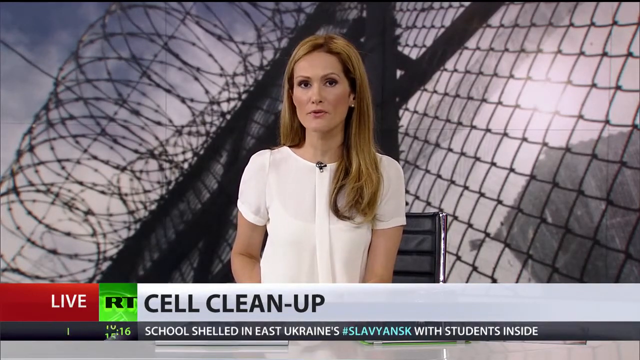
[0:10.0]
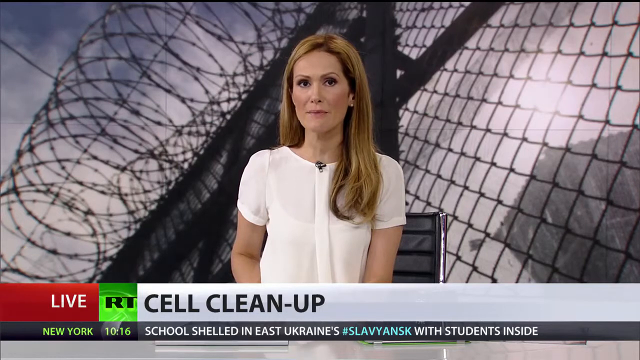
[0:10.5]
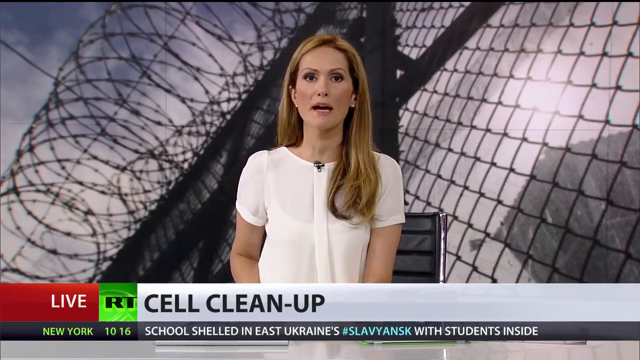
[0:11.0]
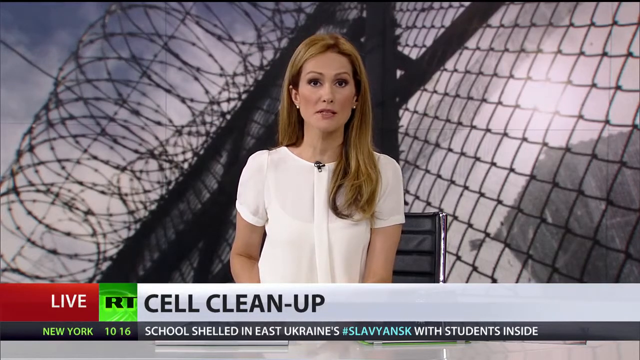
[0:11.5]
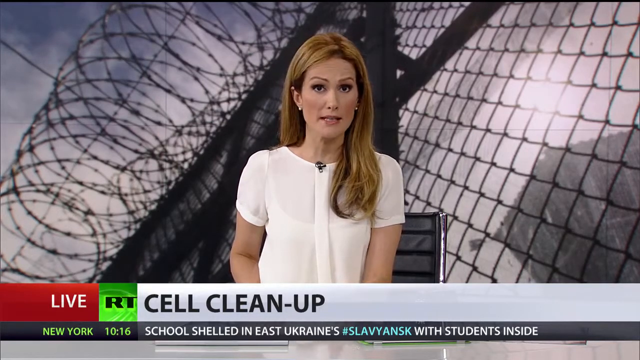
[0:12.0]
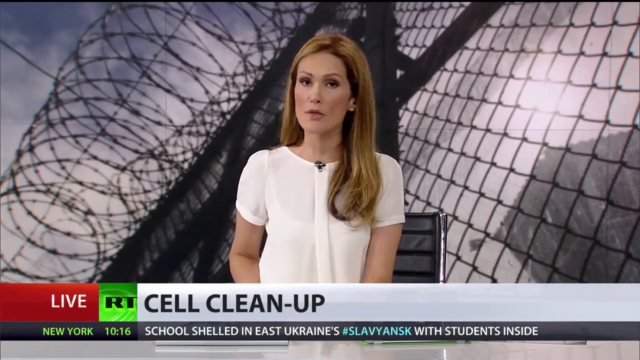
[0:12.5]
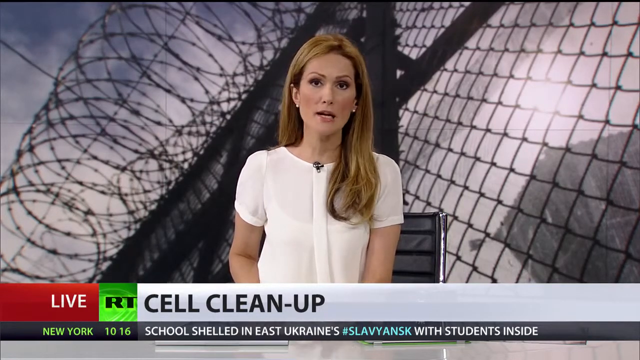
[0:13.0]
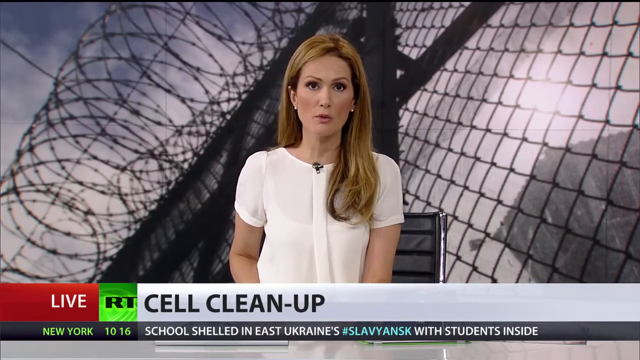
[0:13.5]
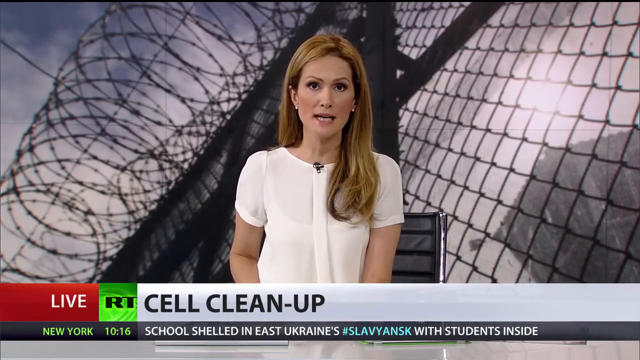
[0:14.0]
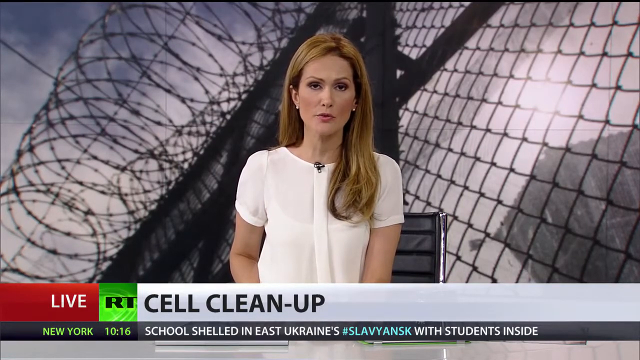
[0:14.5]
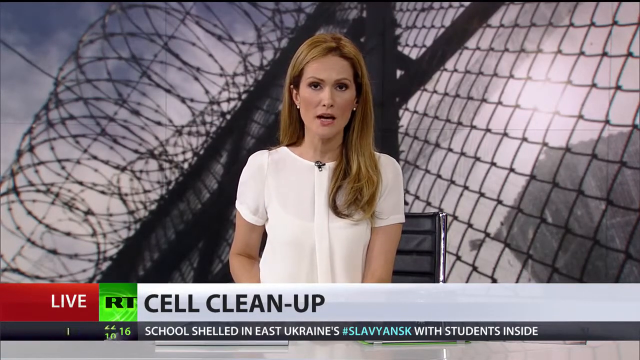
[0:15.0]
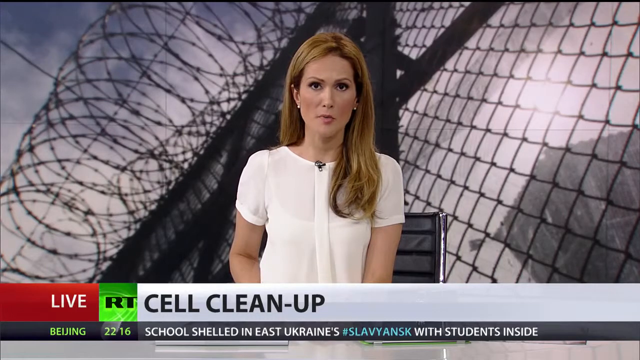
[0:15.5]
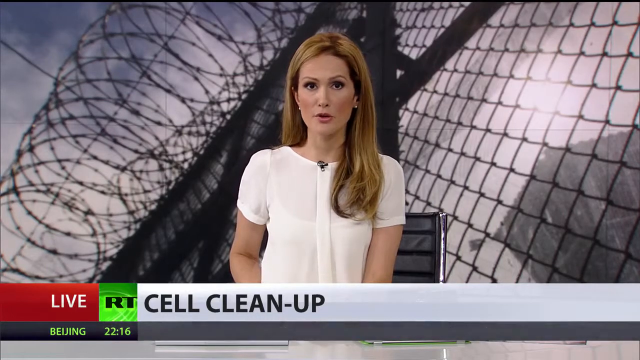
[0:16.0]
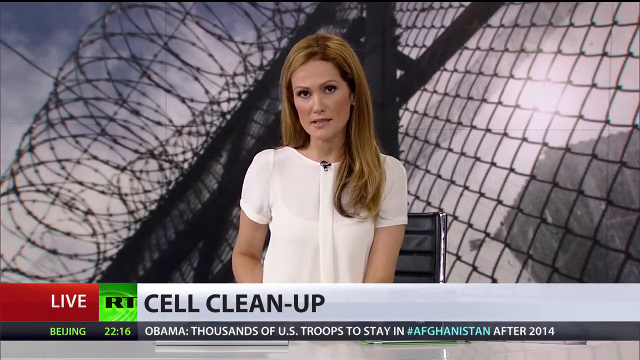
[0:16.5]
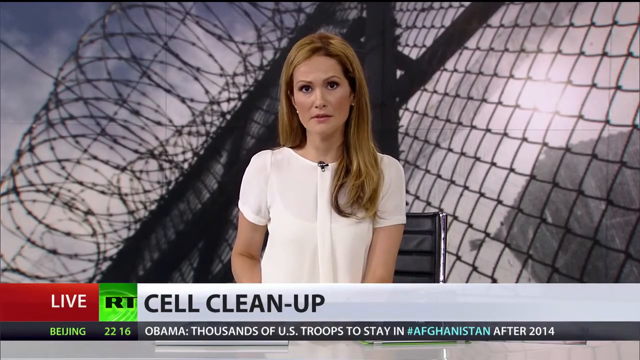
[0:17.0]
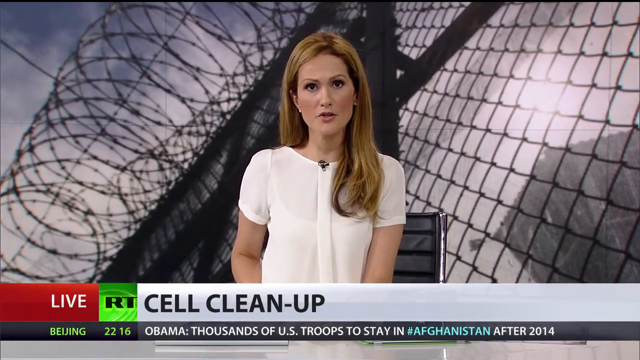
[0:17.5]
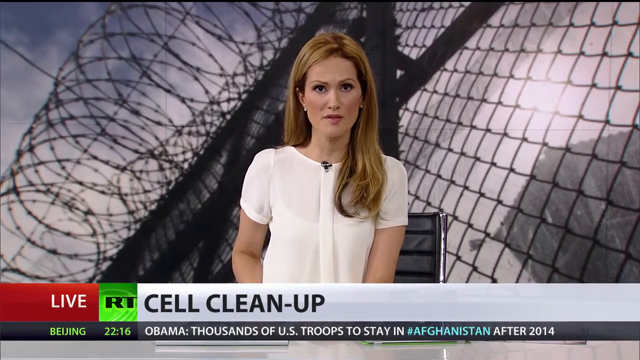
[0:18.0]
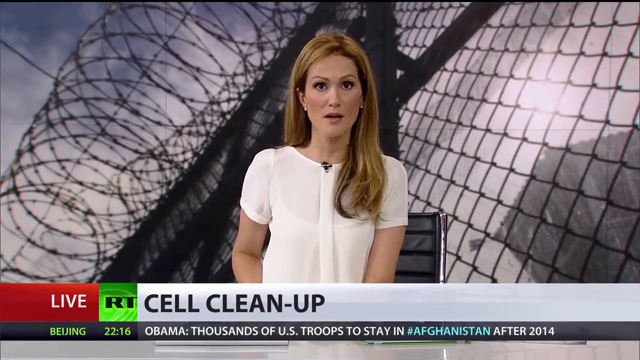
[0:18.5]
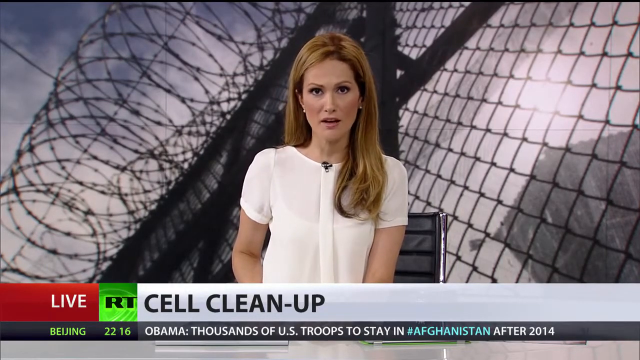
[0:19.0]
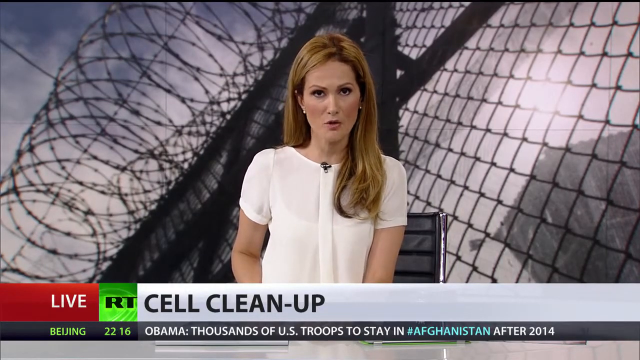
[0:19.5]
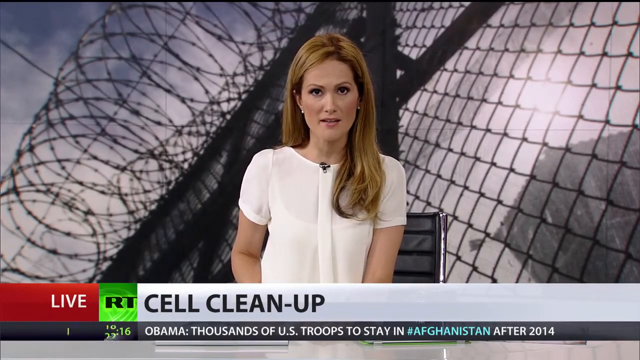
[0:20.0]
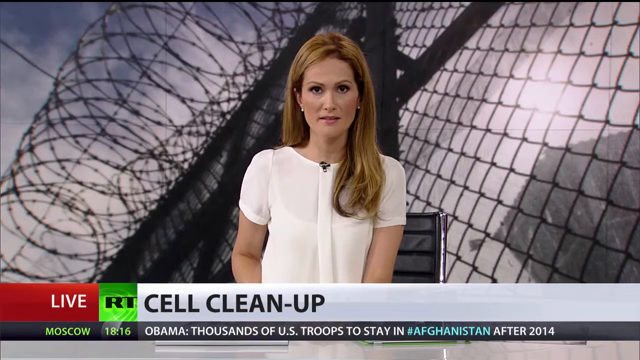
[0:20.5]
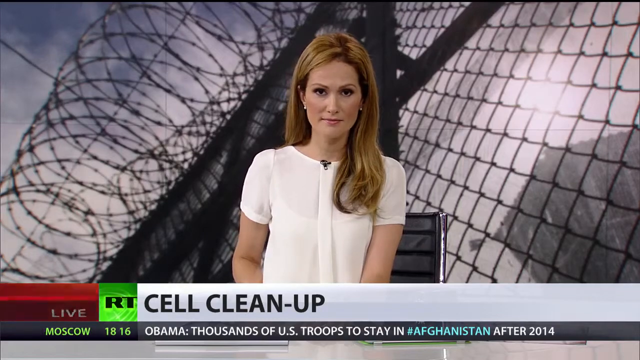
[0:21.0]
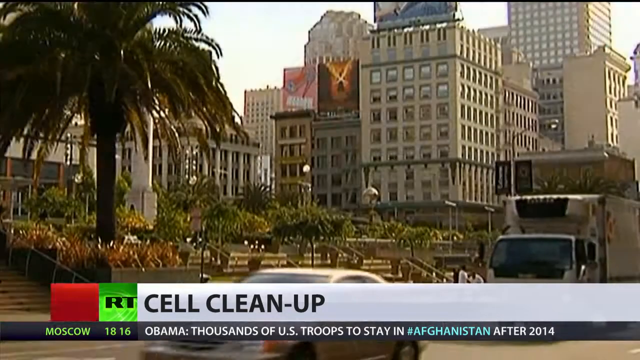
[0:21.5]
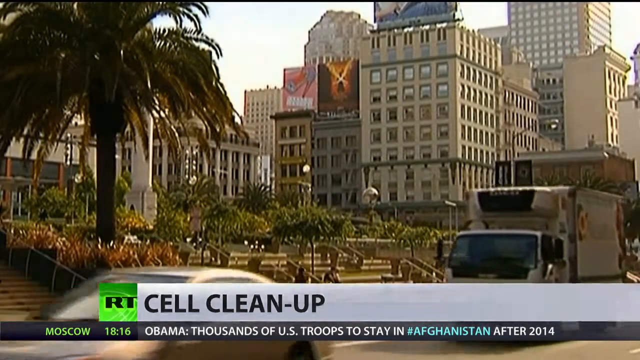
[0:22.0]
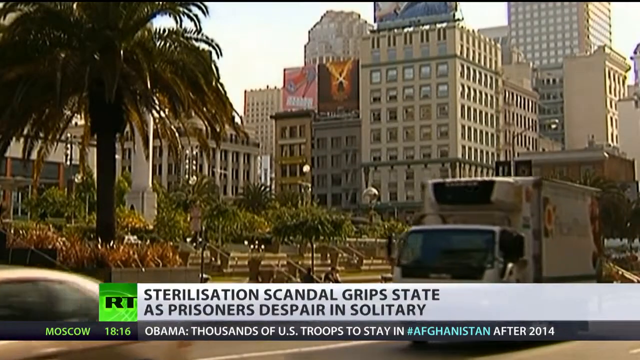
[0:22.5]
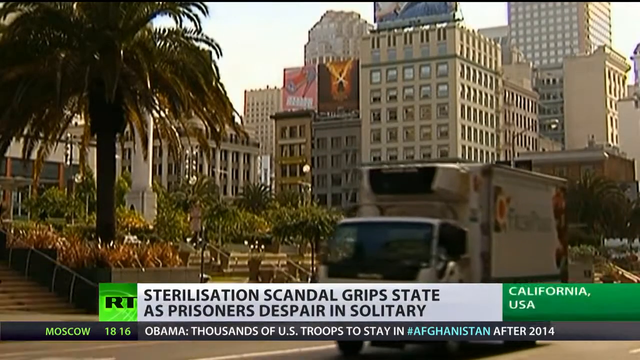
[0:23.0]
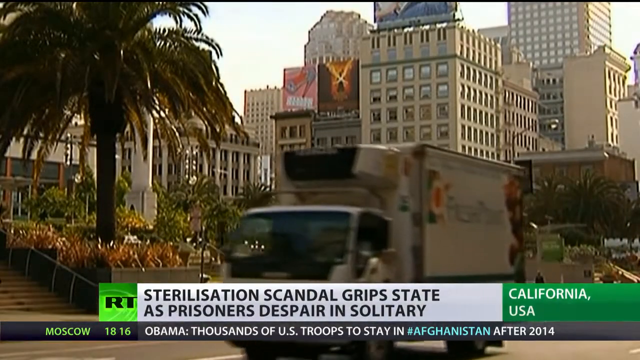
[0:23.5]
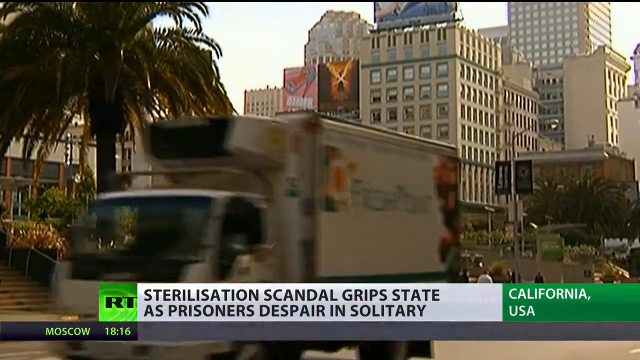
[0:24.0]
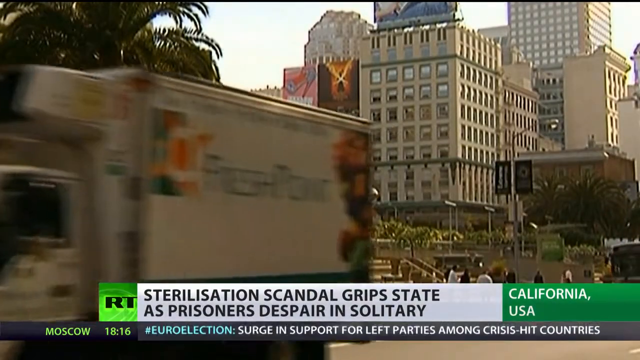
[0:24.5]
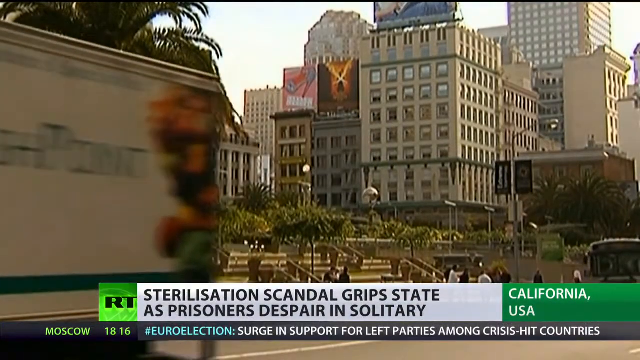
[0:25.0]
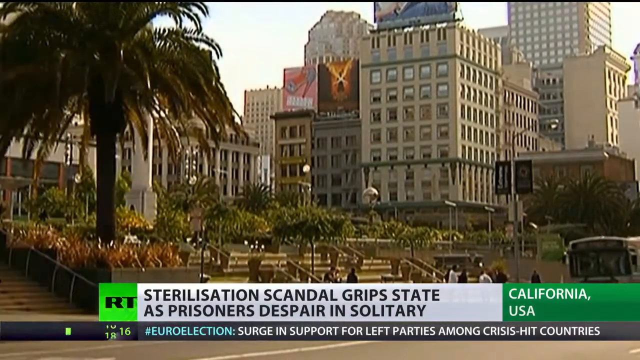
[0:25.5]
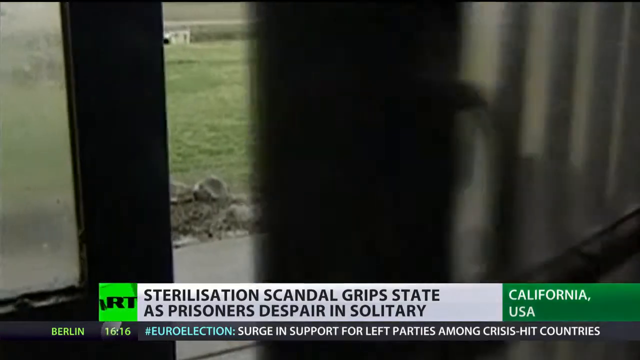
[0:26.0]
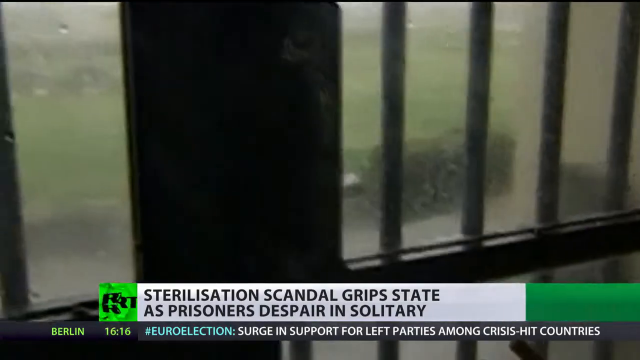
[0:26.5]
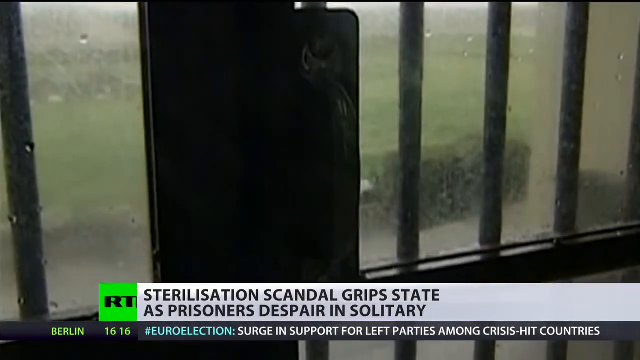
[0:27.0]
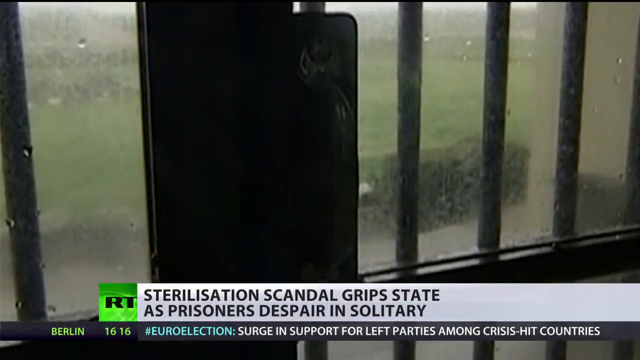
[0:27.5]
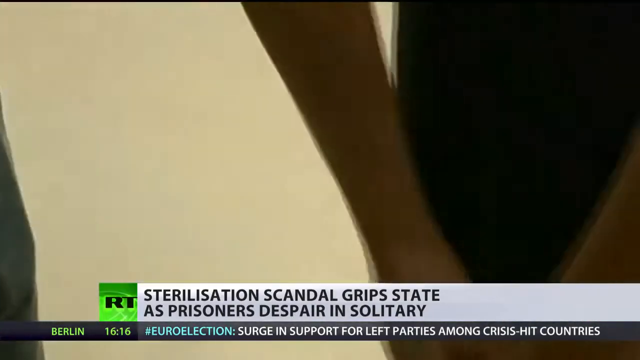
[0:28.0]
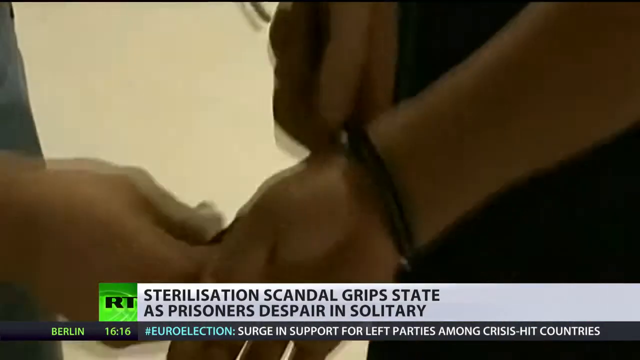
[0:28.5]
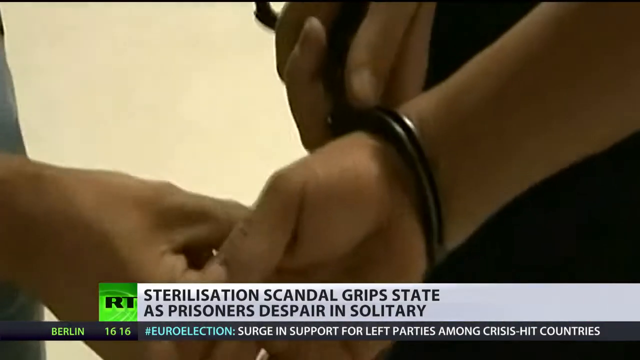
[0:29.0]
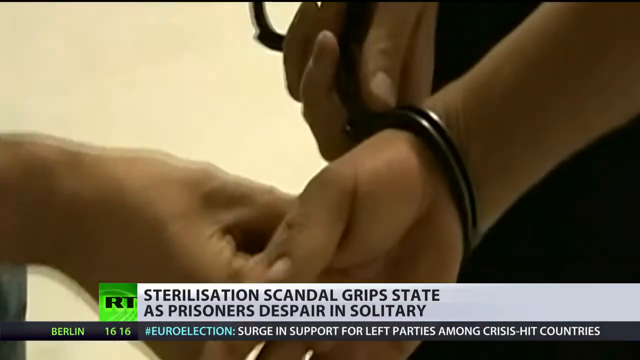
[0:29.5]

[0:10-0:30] A newscaster wears a short-sleeve white blouse with the mic clipped to the middle of the collar. She is white, with longer light brown hair about chest length. In the background there is a chain link fence. "Cell cleanup" and "live" appear at the bottom, along with a ticker listing different events as she talks, including an item about a school in East Ukraine with students inside and one about Obama and troops staying in Afghanistan after 2017. The scene changes to a city where some cars and a truck drive by, with the text "sterilization scandal grips state as prisoners despair in solitary". The scene changes again: a cell door closes, a prisoner is shown, and somebody is adjusting or taking off handcuffs.